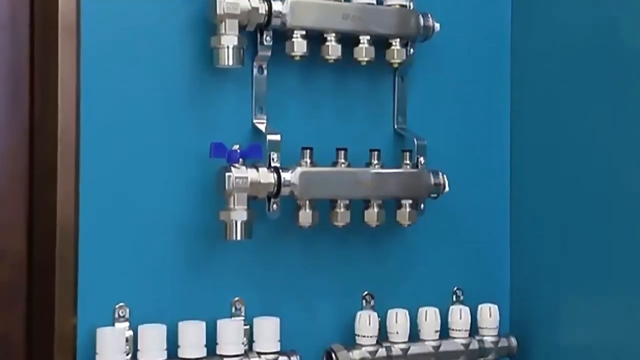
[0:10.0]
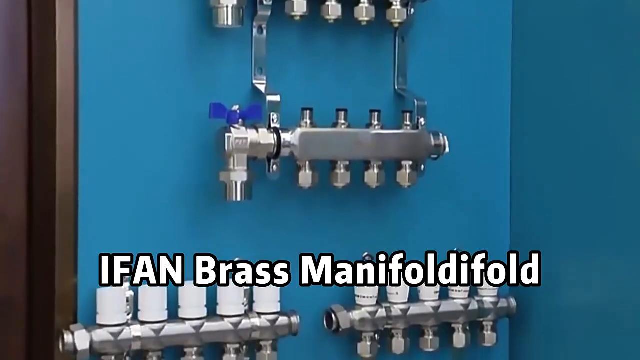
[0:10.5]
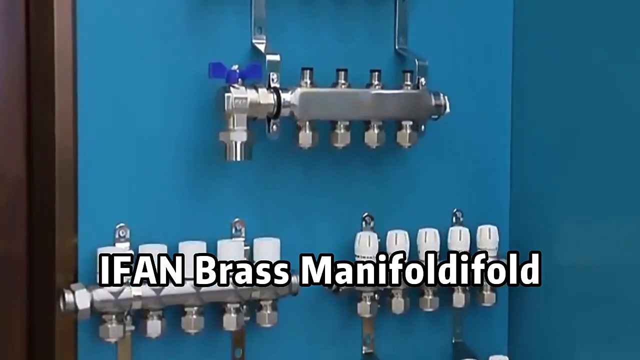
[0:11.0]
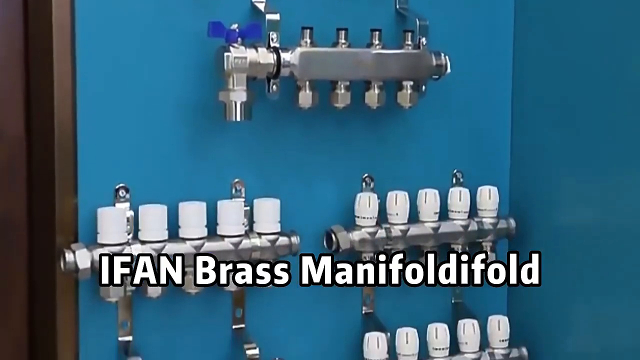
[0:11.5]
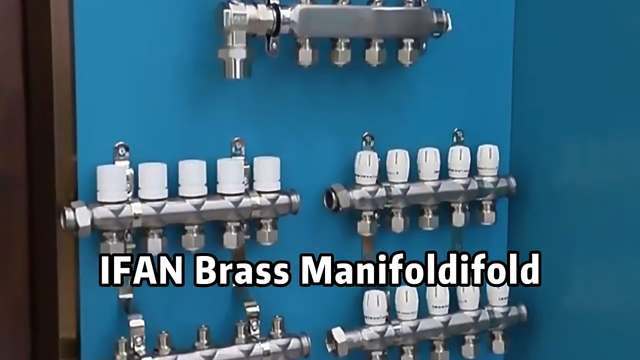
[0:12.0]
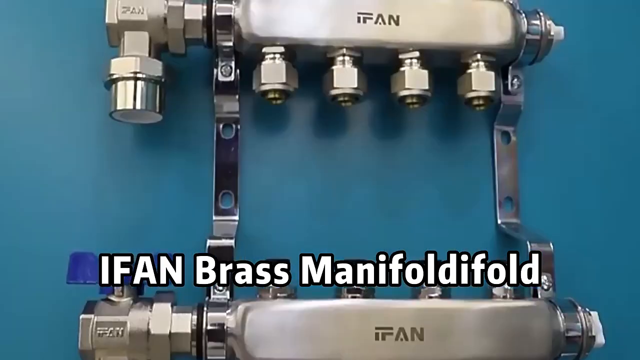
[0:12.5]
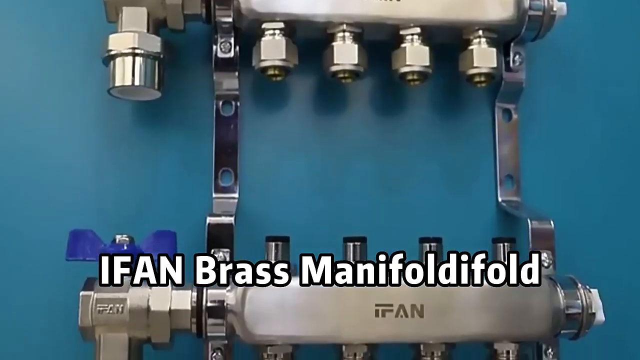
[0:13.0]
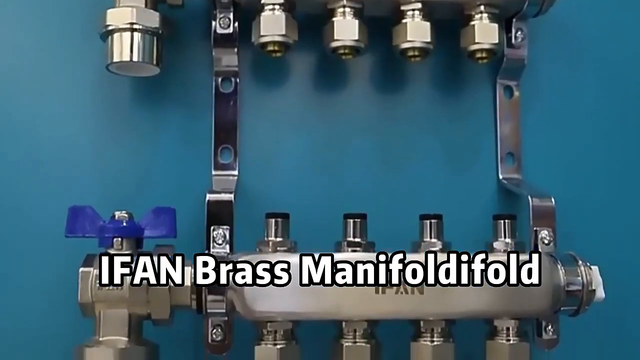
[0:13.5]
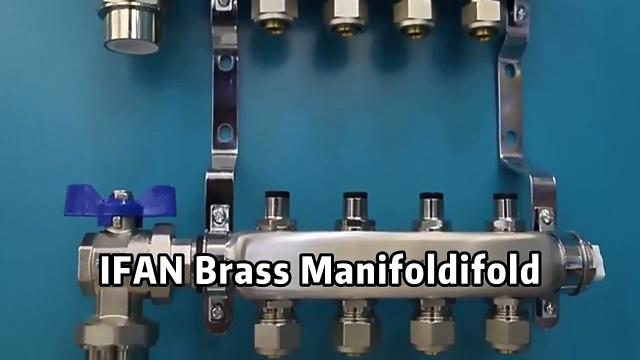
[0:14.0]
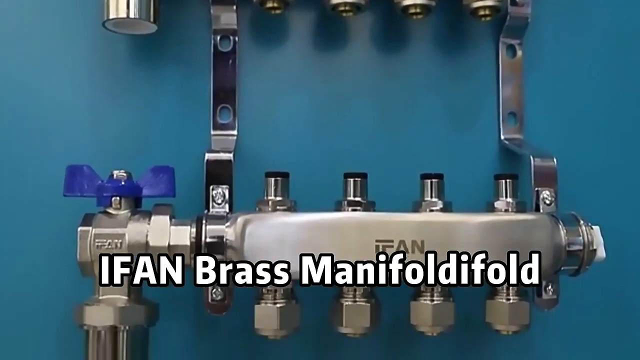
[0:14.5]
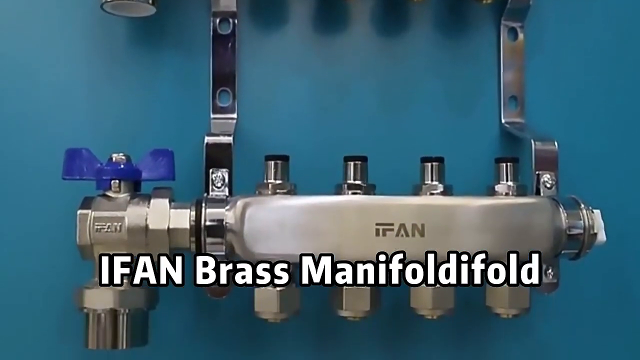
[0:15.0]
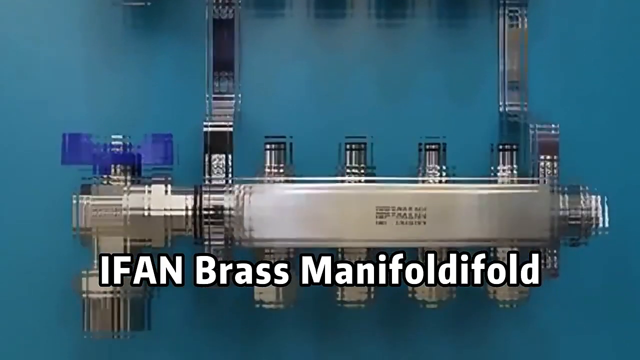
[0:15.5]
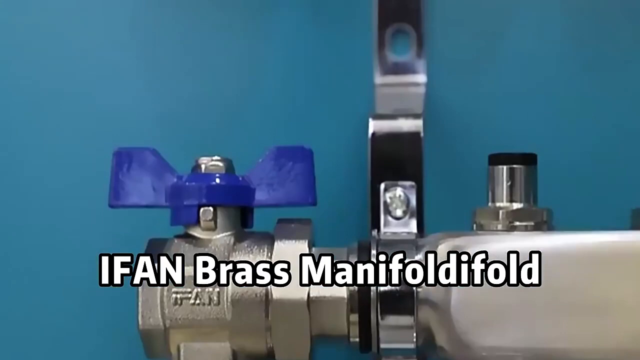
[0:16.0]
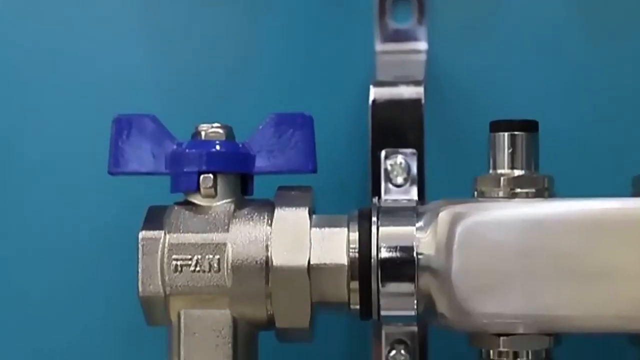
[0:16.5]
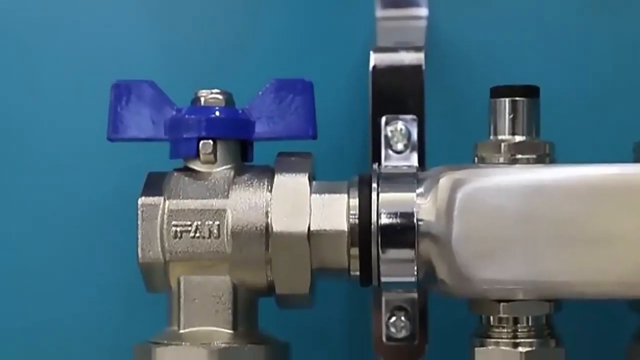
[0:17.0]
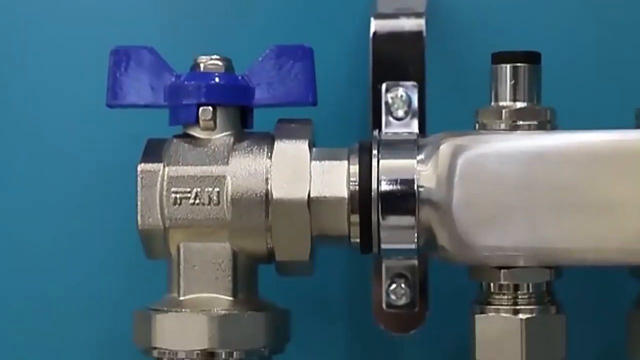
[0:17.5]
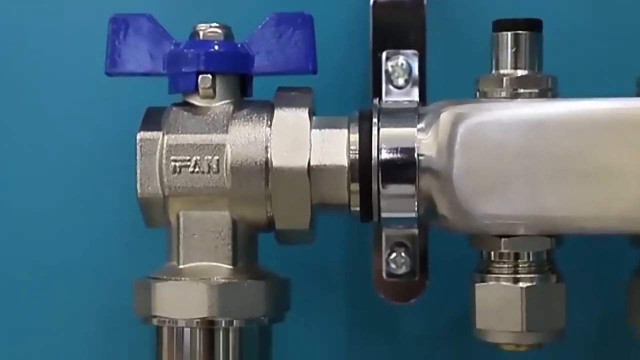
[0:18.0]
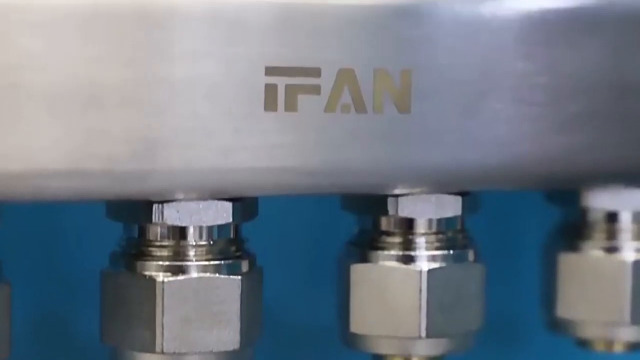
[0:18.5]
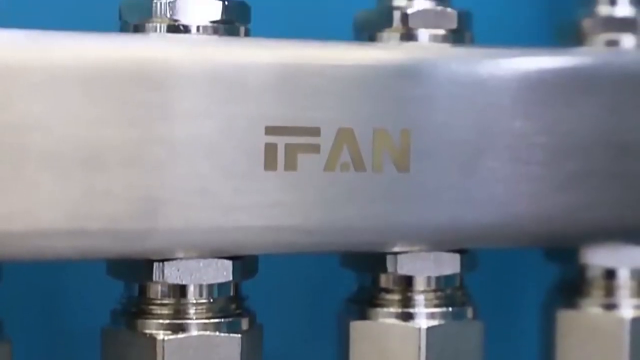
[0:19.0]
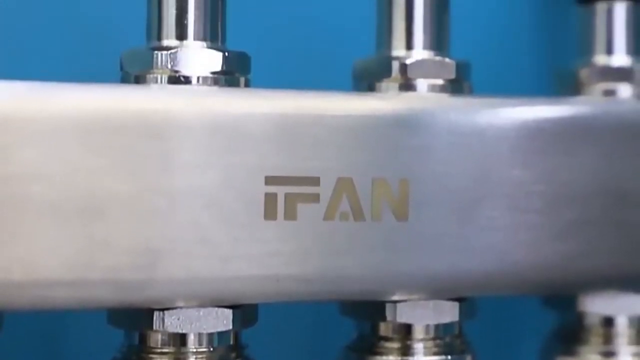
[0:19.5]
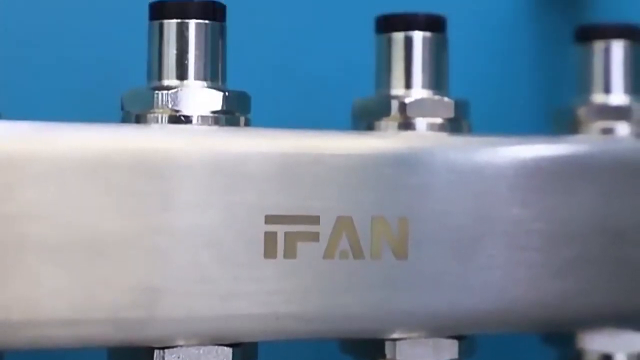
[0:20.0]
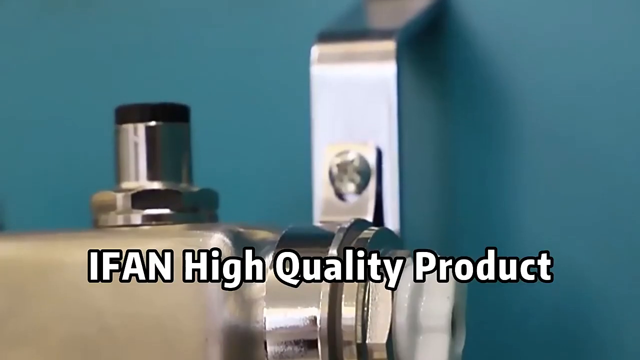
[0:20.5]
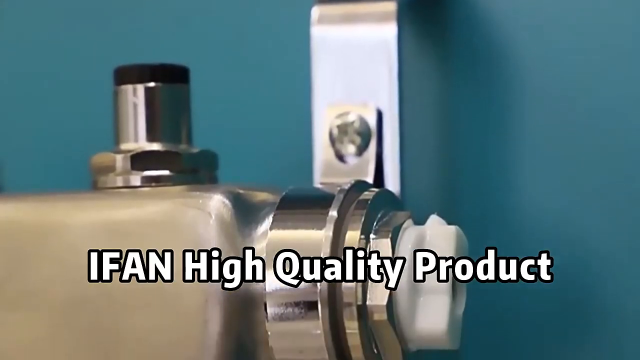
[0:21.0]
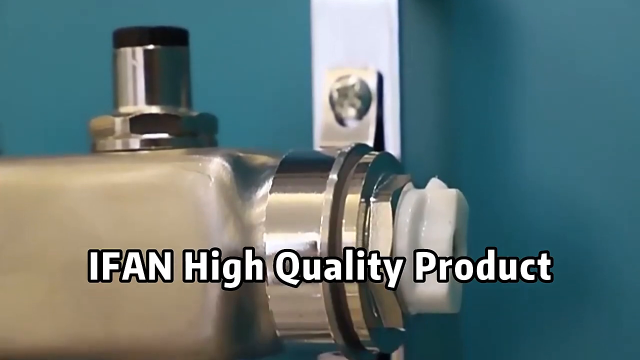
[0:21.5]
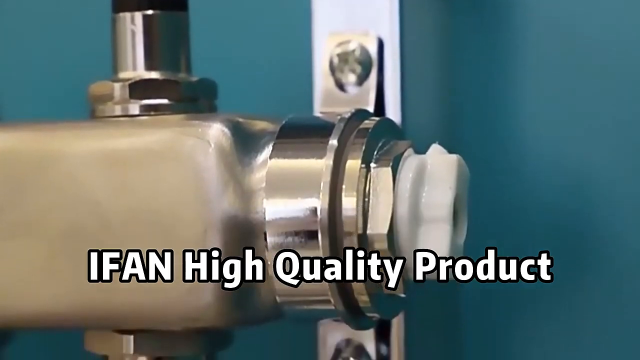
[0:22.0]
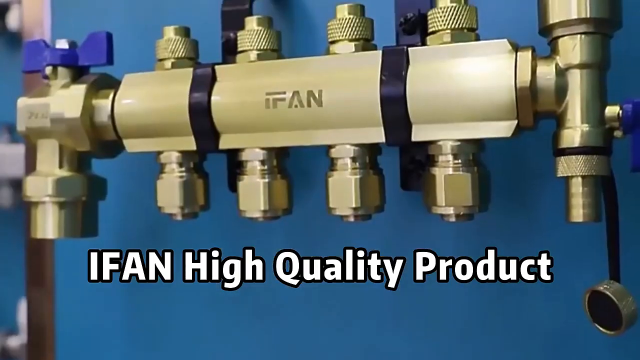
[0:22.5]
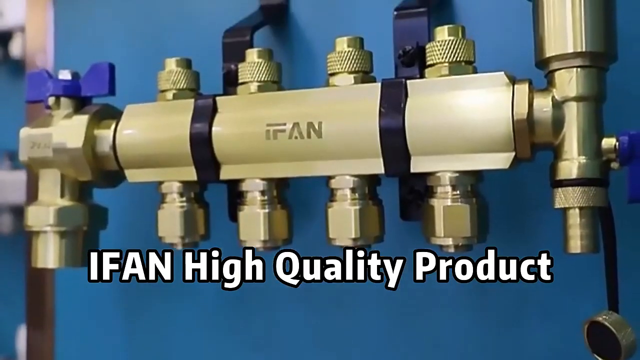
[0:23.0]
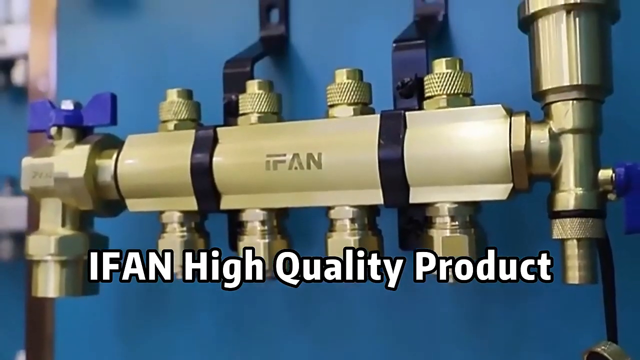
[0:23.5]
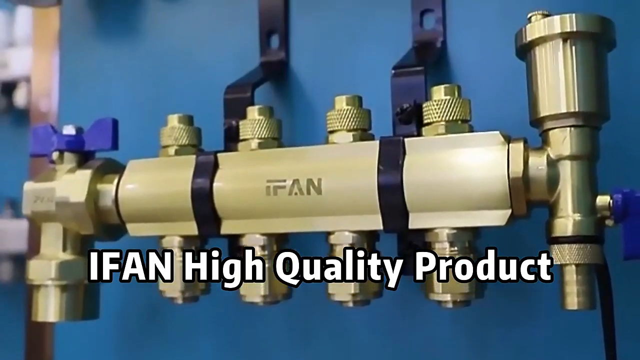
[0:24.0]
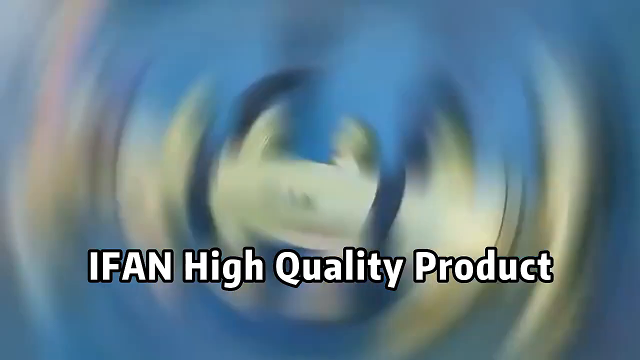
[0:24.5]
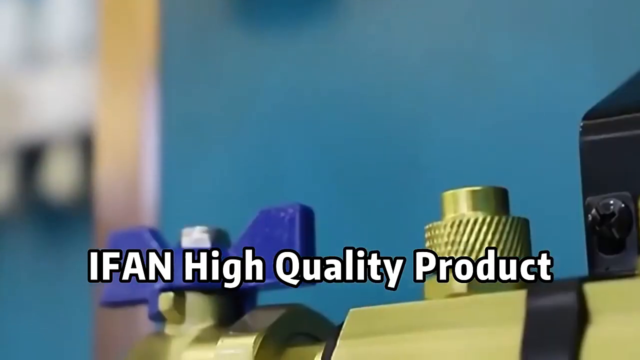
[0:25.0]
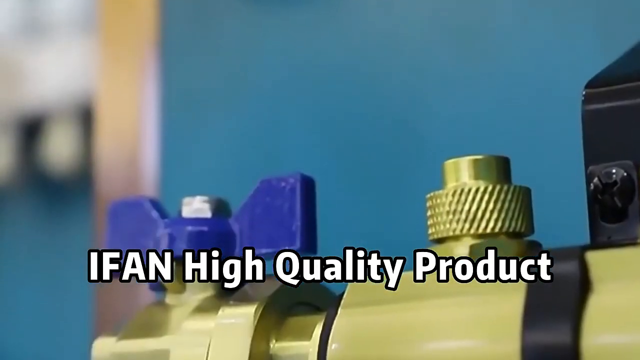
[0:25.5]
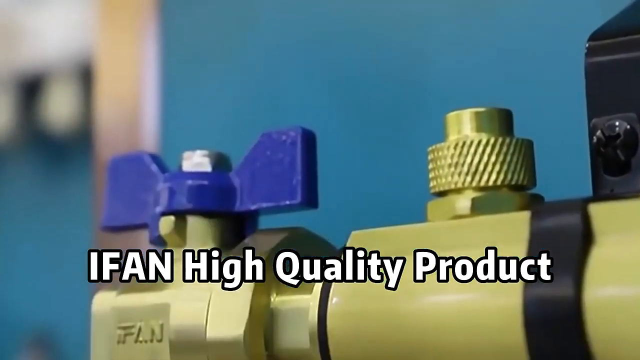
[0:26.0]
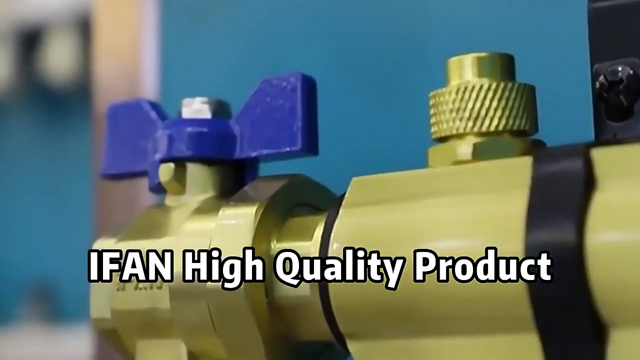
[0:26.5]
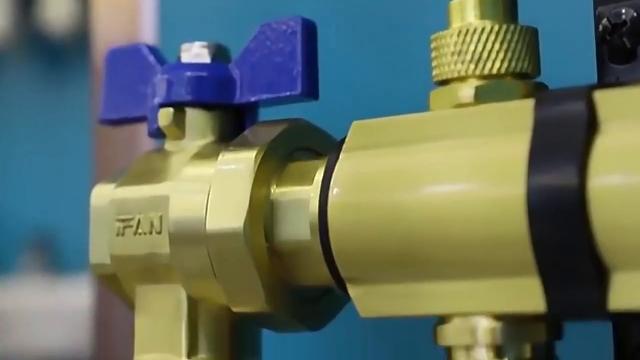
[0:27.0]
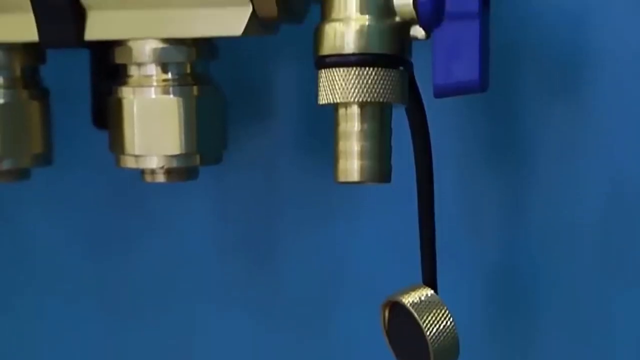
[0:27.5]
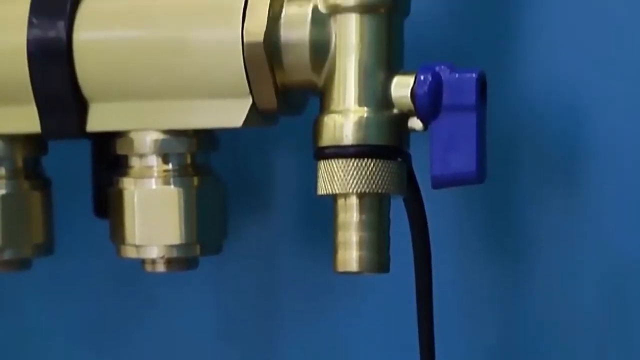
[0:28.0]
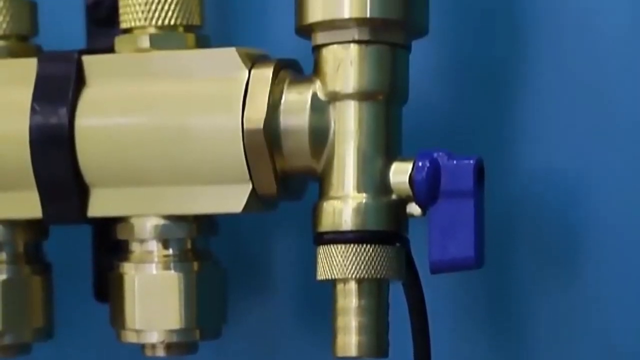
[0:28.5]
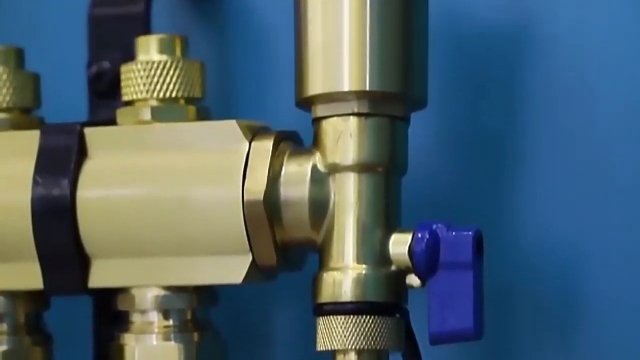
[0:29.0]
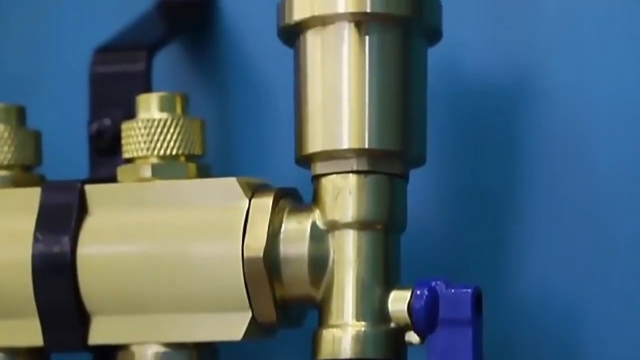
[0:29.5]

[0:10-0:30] The inside of a building is shown, with "IFAN Brass Manifold" on the screen. The company's logo is stamped into the products, and all of them say "iFan" on them. Some of the manifolds are a shiny brass color. The brand-new products are attached to the blue wall, anchored with strong metal attachments and drilled into the wall. They have spouts and a knob to turn them off and on; one knob is dark blue and almost matches the color of the wall. The camera moves back and forth and up and down to show the products very closely. They look like a solid metal material and look like they would be quite heavy.